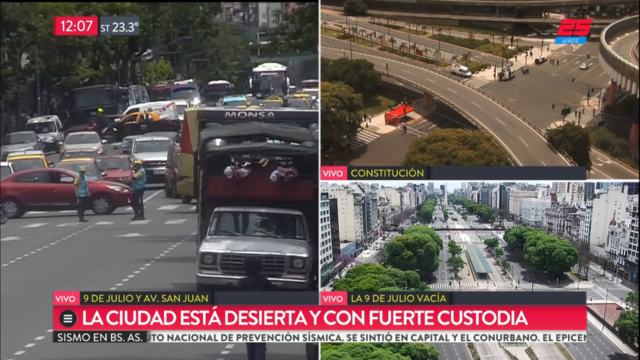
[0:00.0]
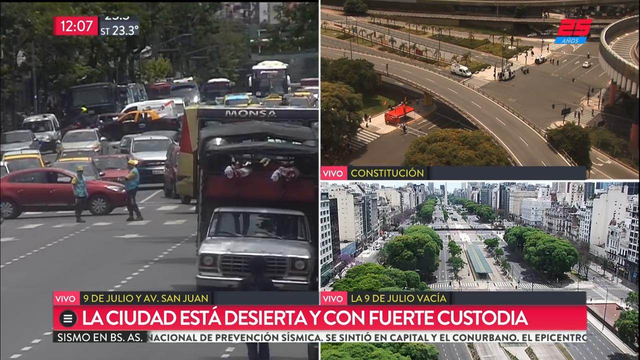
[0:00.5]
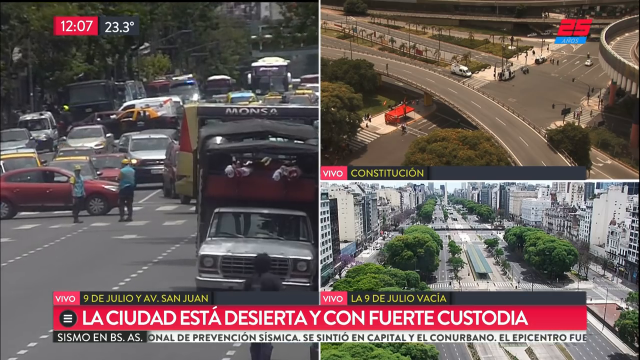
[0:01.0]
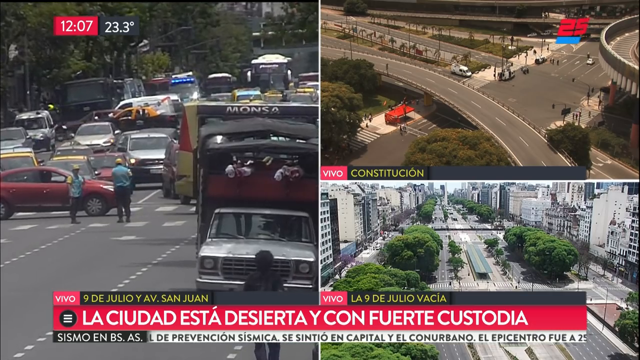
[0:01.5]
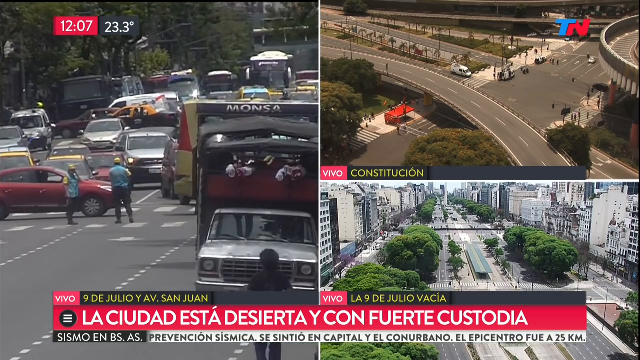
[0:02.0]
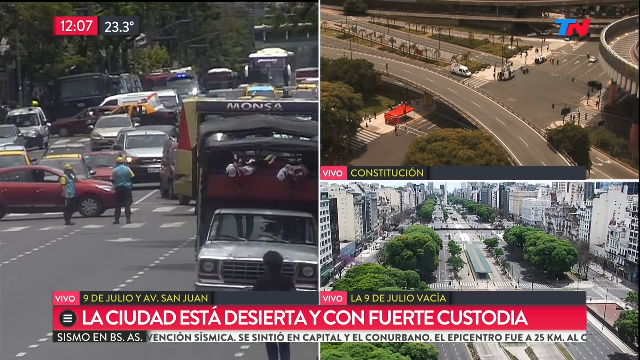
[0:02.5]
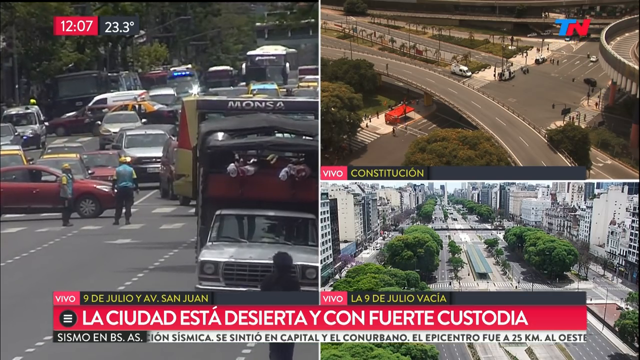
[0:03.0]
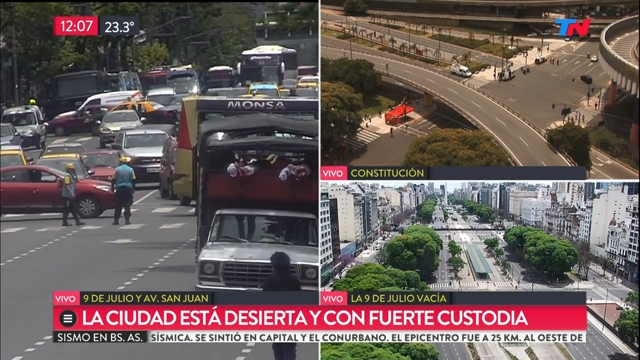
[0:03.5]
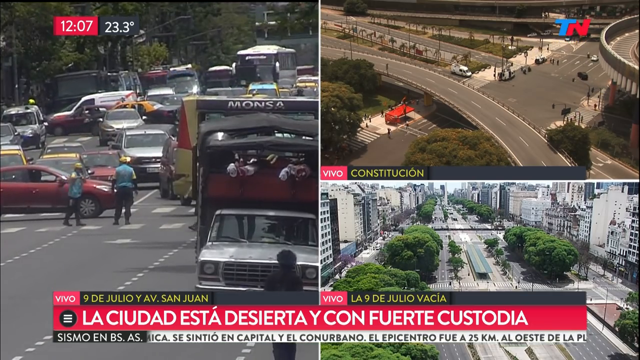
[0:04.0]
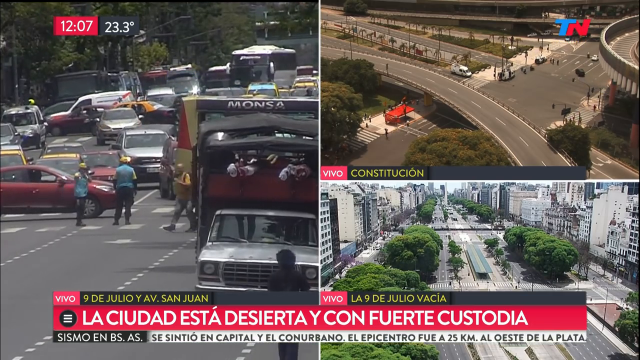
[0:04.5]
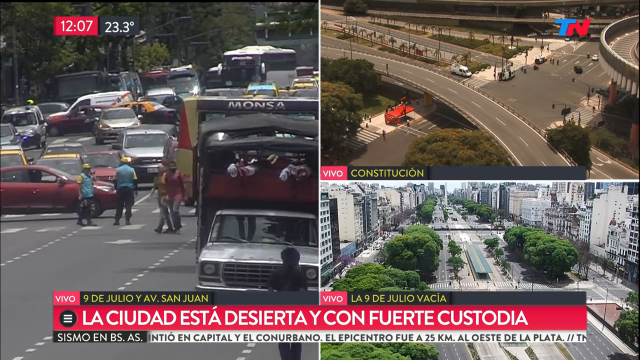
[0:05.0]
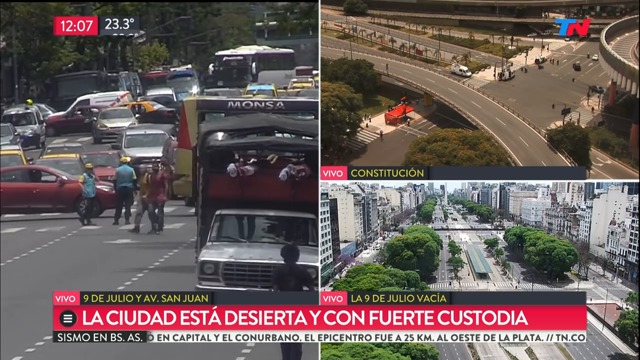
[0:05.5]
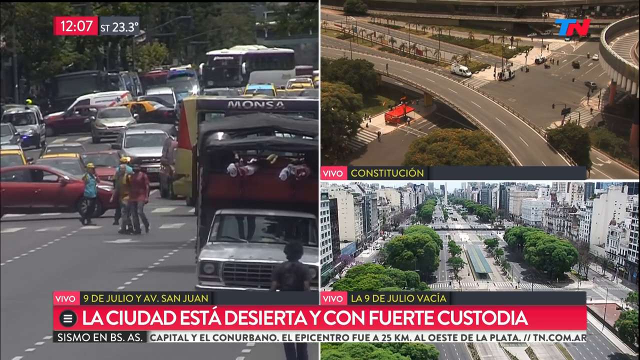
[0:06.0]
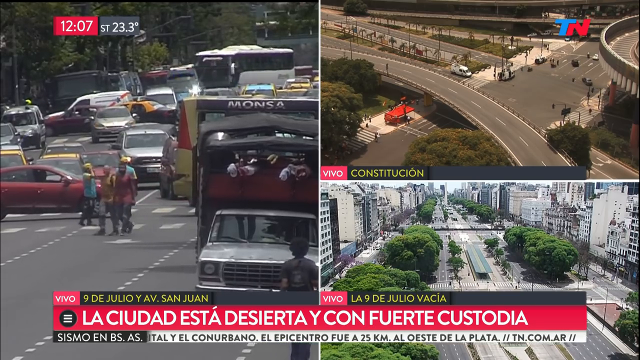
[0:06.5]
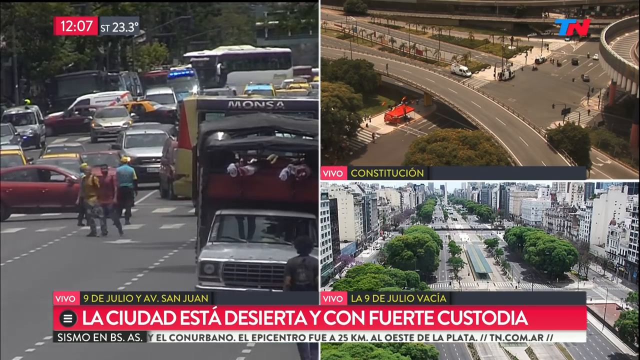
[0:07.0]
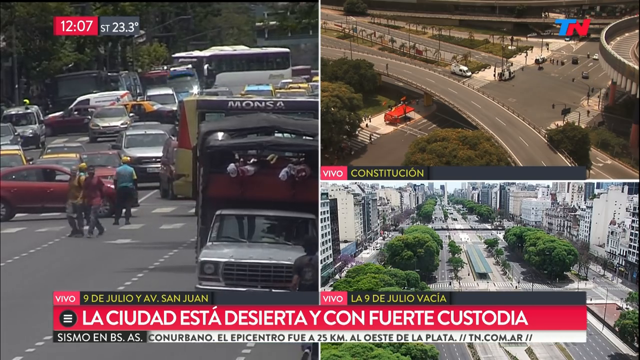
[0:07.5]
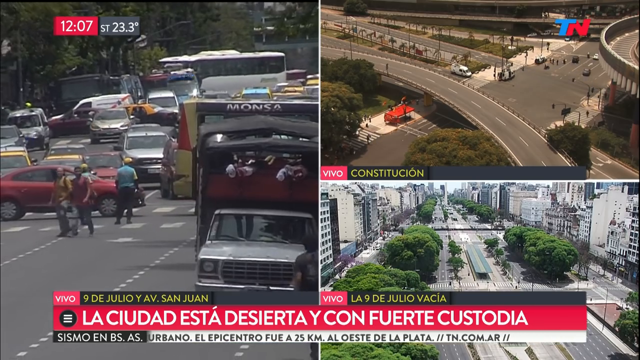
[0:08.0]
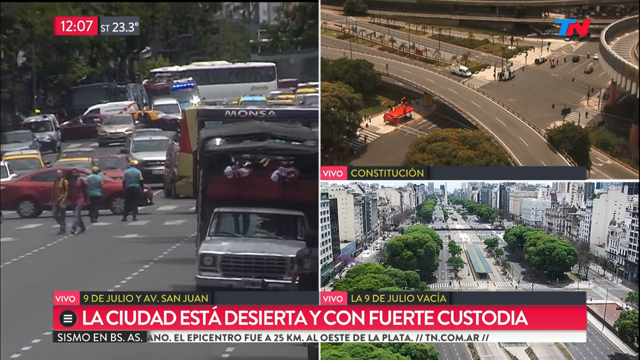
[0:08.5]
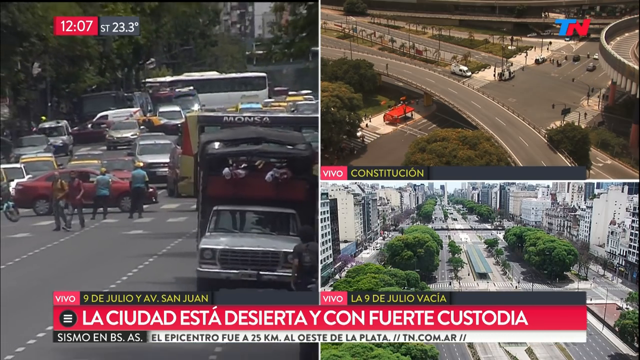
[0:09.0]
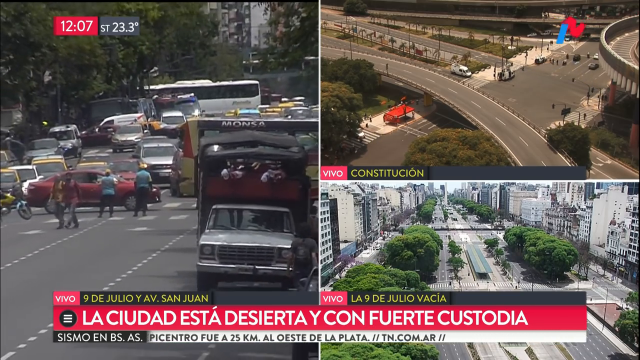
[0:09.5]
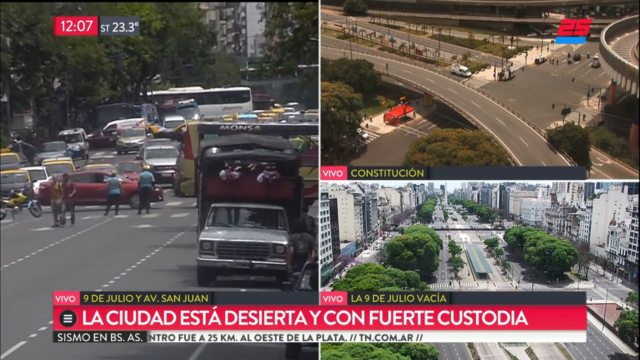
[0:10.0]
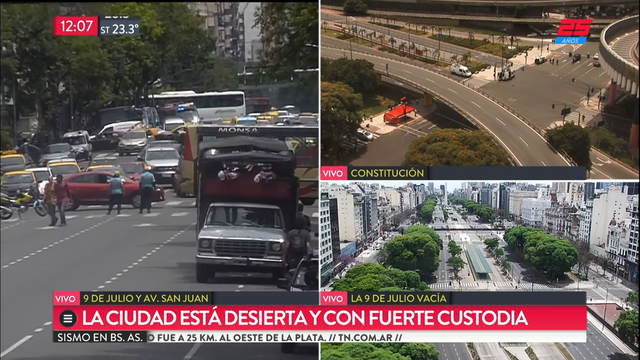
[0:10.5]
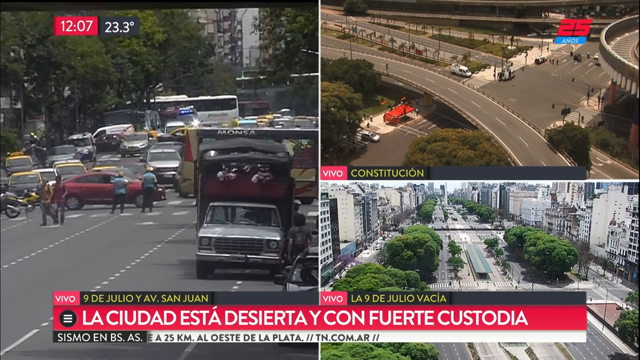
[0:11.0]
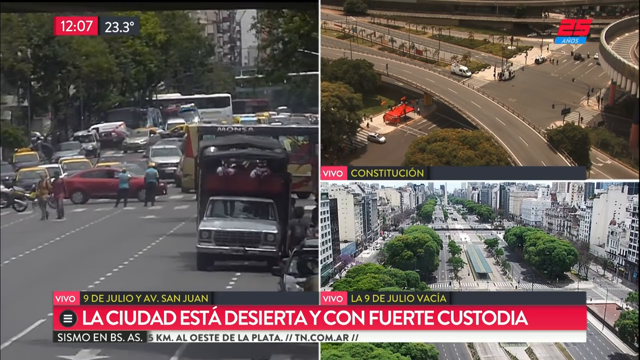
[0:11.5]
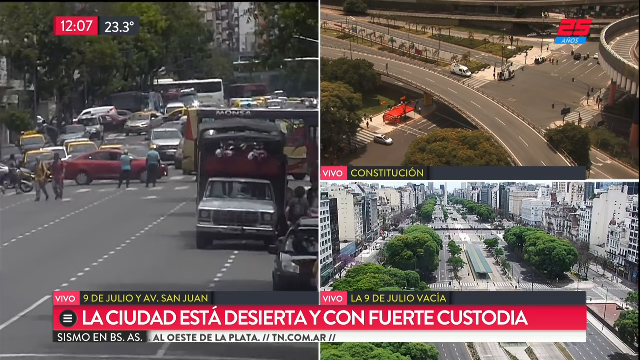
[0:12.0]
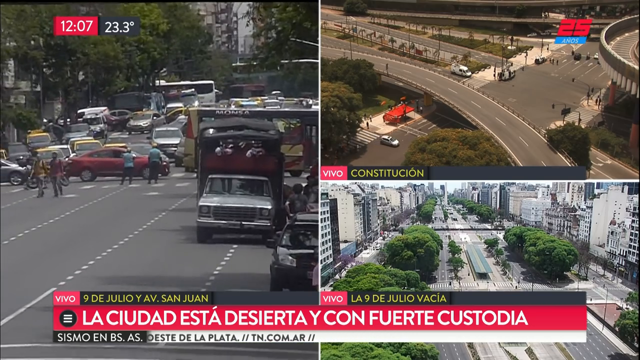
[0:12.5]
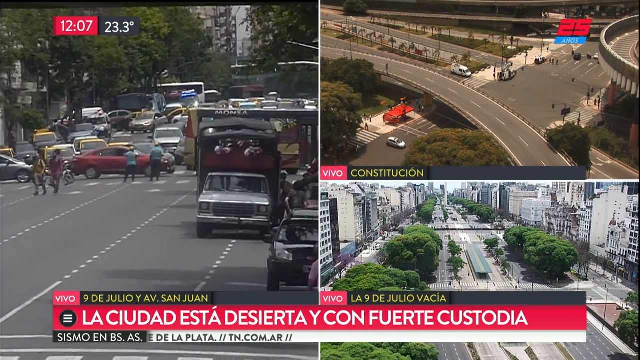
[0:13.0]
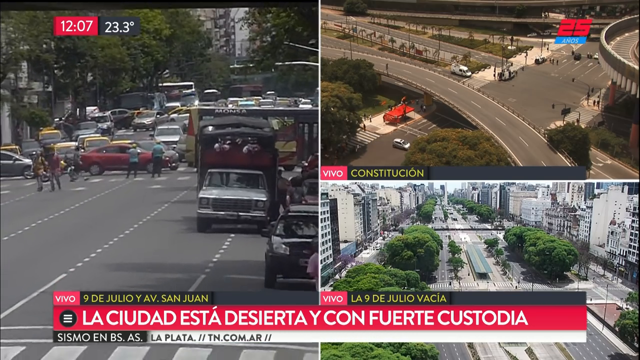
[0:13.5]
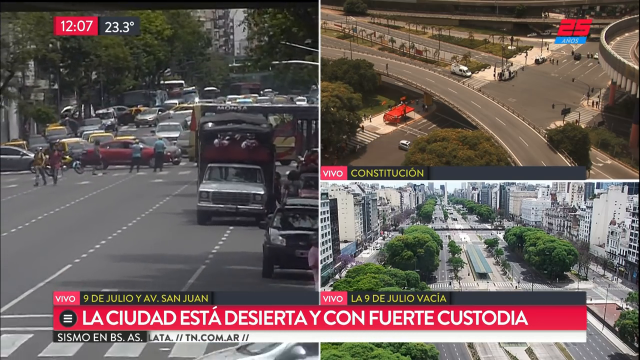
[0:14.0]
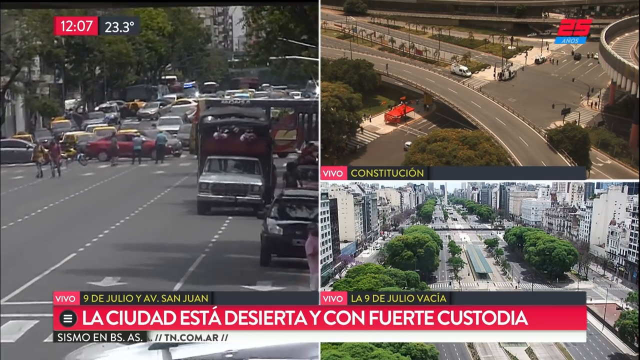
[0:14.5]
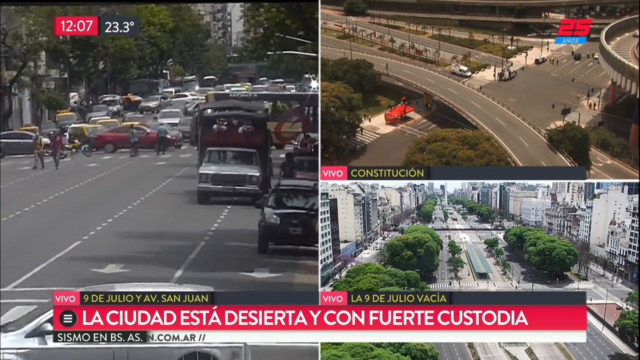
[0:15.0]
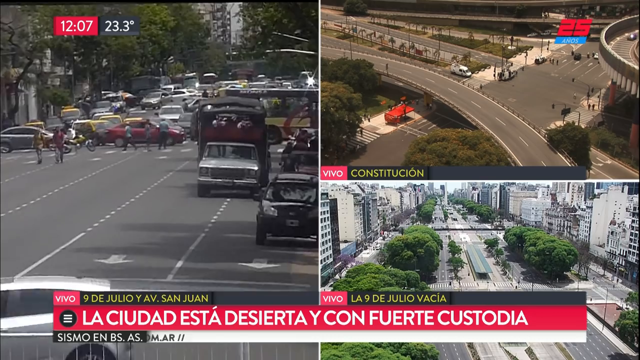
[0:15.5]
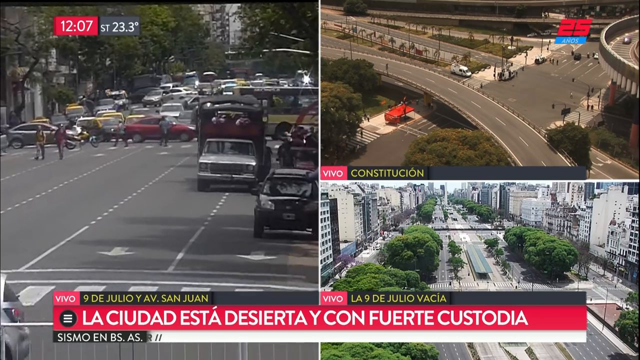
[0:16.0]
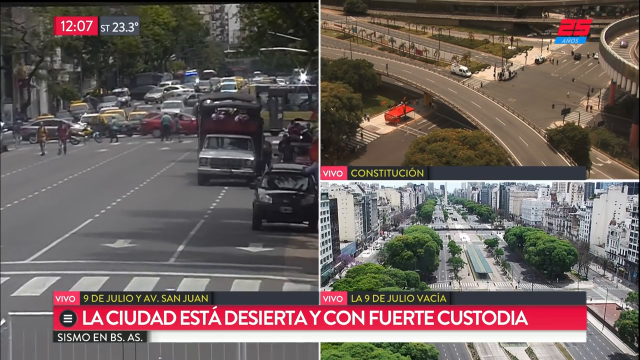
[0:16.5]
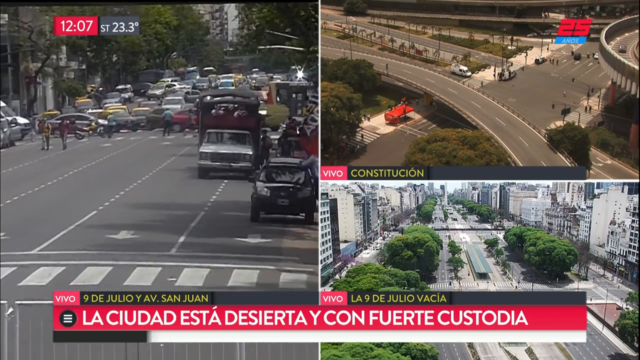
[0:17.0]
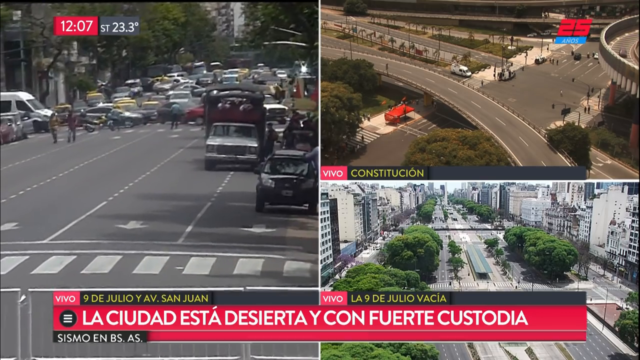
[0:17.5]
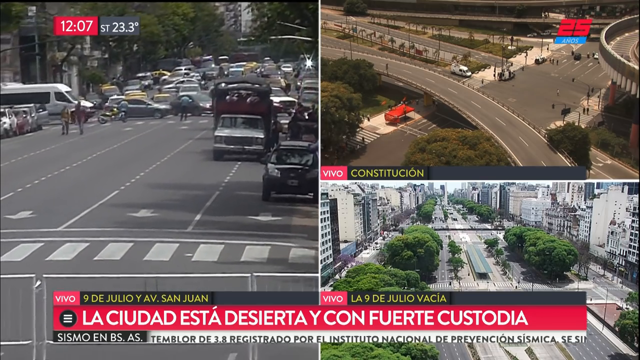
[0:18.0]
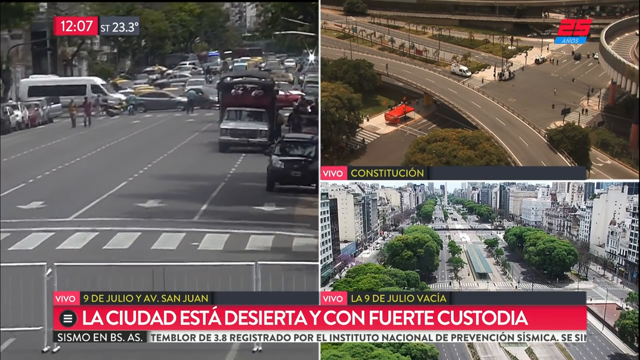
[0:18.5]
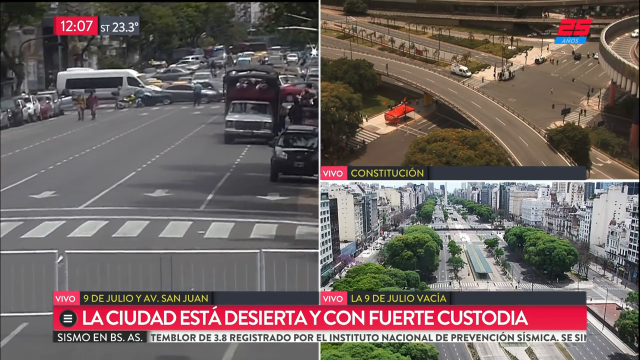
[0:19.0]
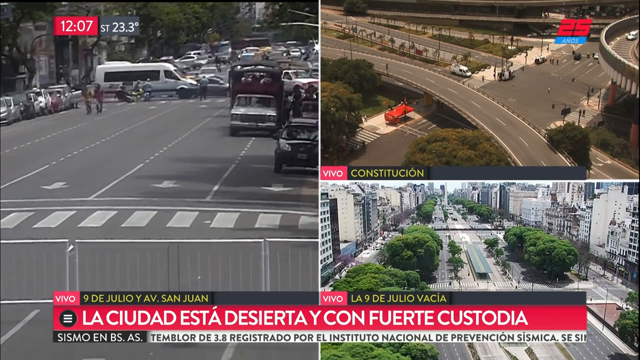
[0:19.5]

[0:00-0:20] The screen shows three images: a large one on the left and two smaller rectangles stacked on top of each other on the right. They appear to be some type of traffic view. In the left image, a red rectangle shows the time, 12.07, and beside it a gray, black-looking rectangle has white writing reading "ST 23.3 degrees." Several cars fill the street and it looks very congested, with cars going both ways, left and right and north and south. People stand in the middle of the street as if they are directing traffic. The two images on the right show some type of traffic views, though it is not really clear what is happening. In the top one, people walk, a few cars move around, people stand in the middle of the street, and at the bottom it has "Vivo Constitucion." The bottom image shows little beyond a bunch of trees, without many people or cars moving back and forth. Cars move in all of the screen except the one at the far right. On the left, people walk in the middle of the street and trucks and buses move. The left view kind of extends out, showing more of the traffic and congestion. Some cars are not moving, and it looks like the traffic is being diverted.